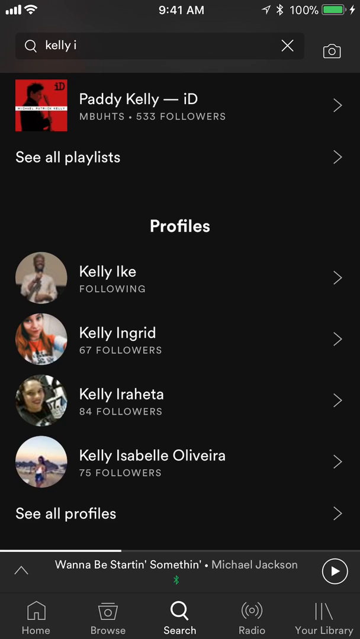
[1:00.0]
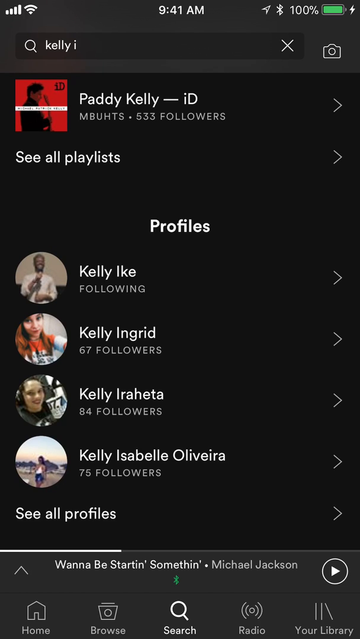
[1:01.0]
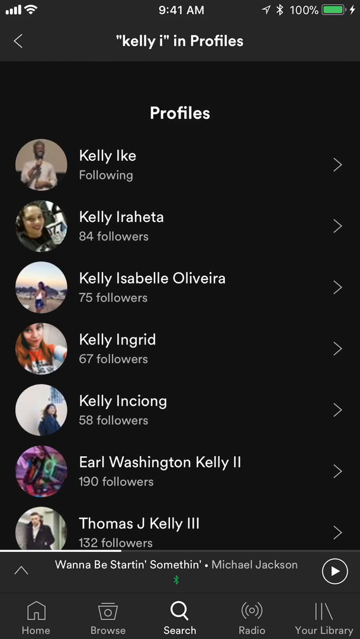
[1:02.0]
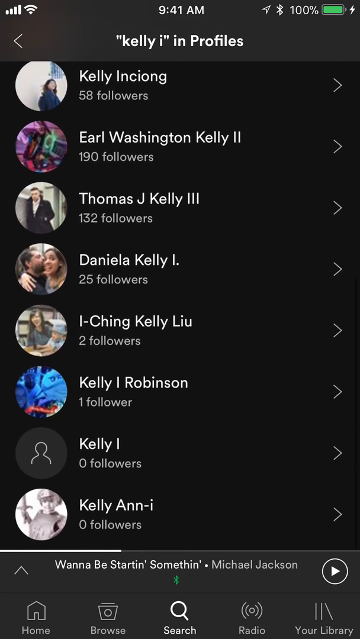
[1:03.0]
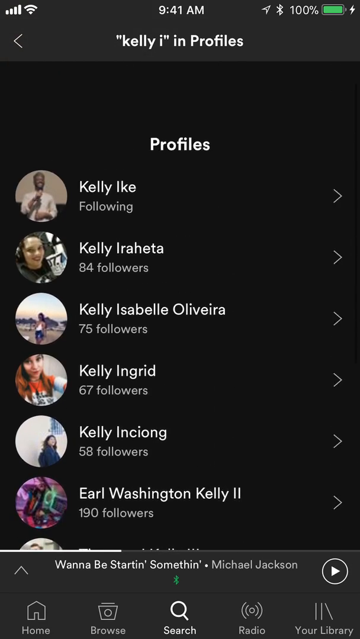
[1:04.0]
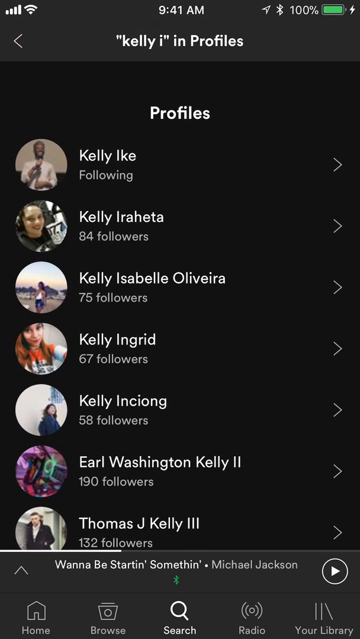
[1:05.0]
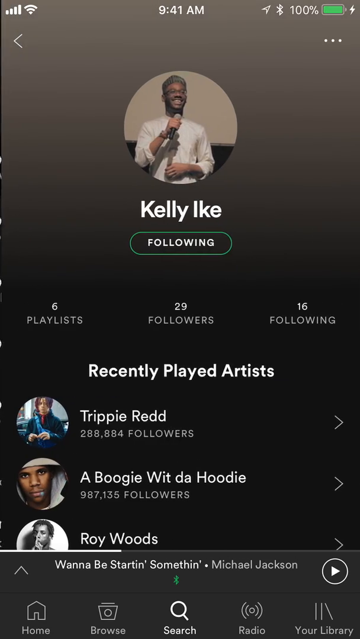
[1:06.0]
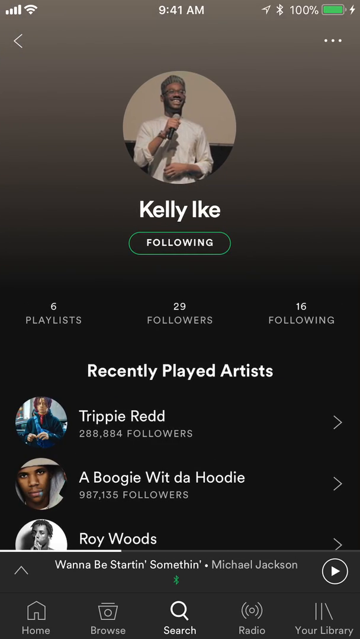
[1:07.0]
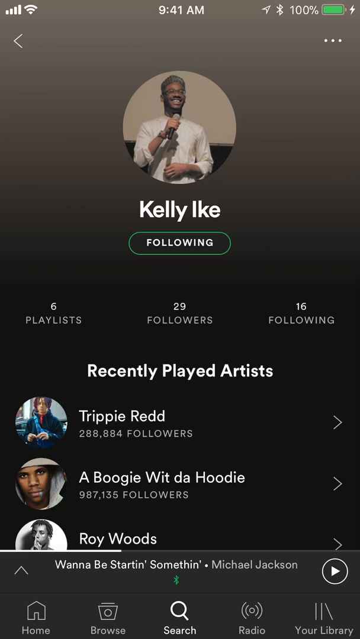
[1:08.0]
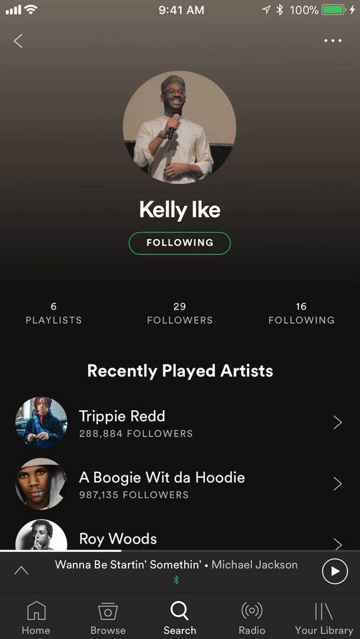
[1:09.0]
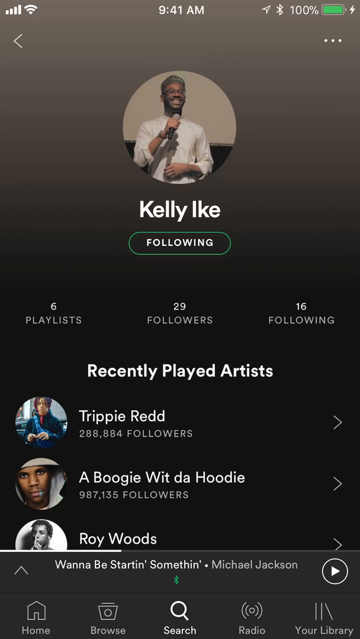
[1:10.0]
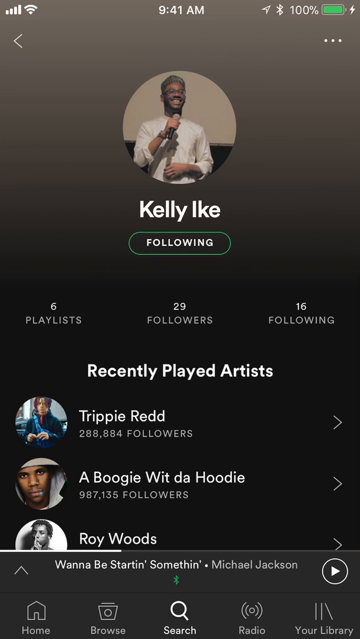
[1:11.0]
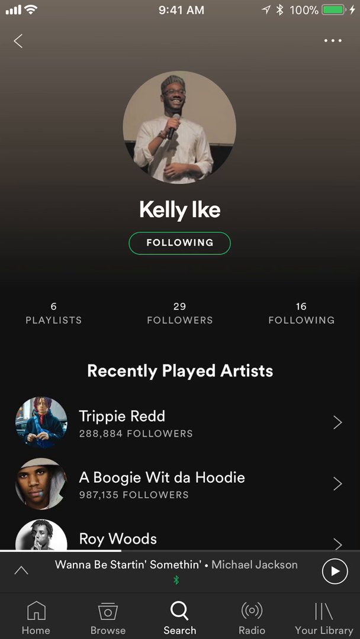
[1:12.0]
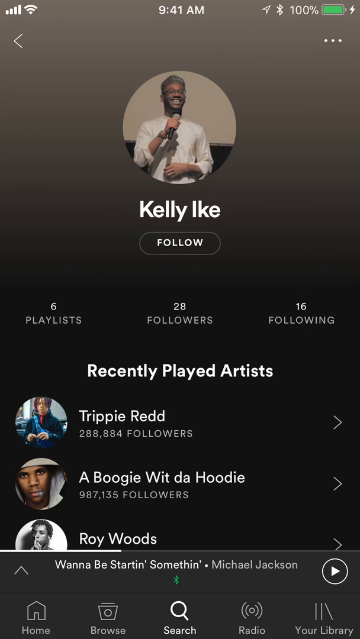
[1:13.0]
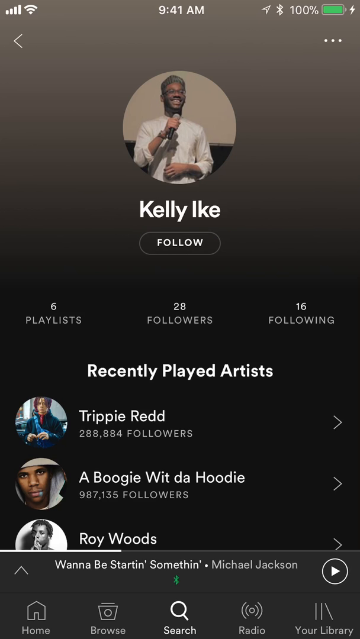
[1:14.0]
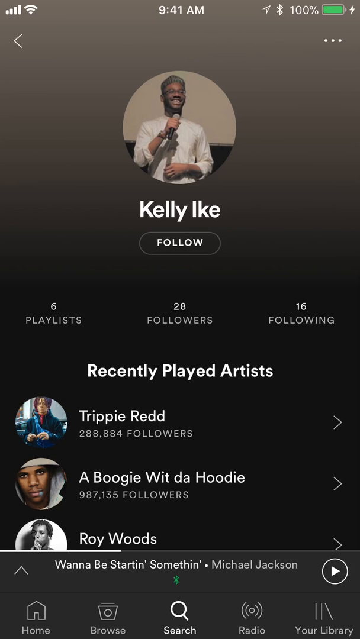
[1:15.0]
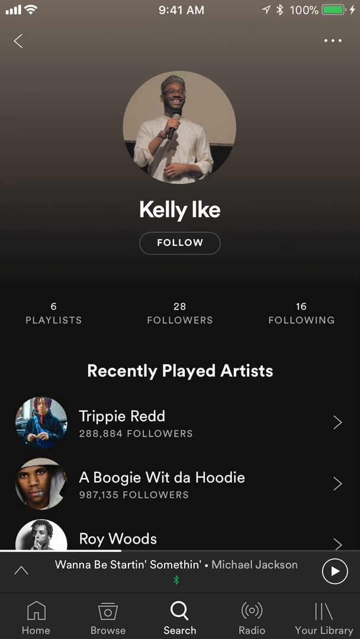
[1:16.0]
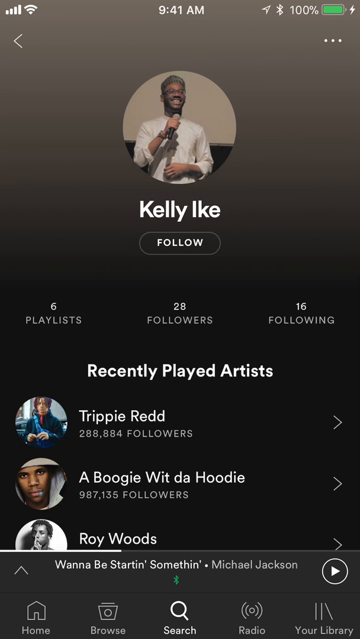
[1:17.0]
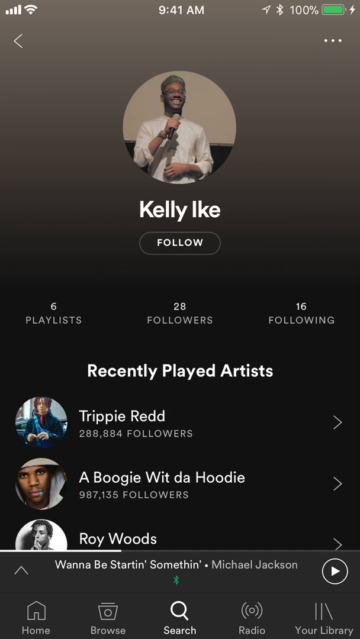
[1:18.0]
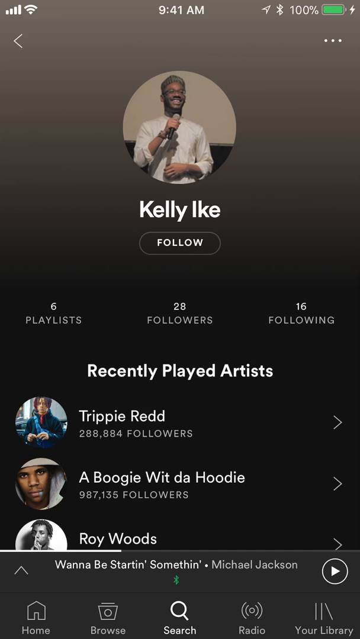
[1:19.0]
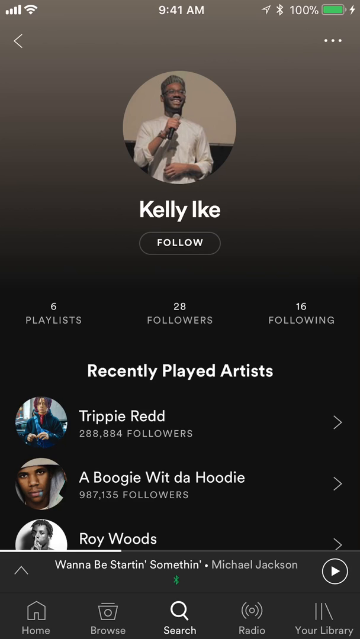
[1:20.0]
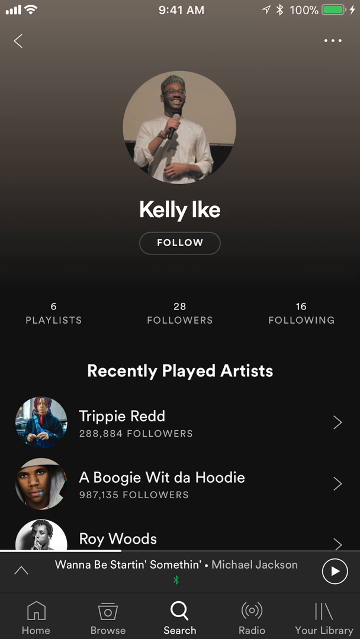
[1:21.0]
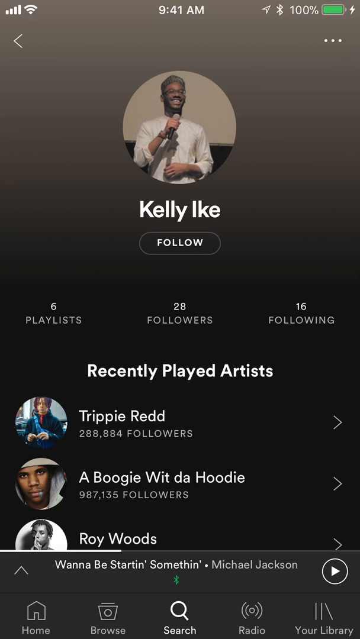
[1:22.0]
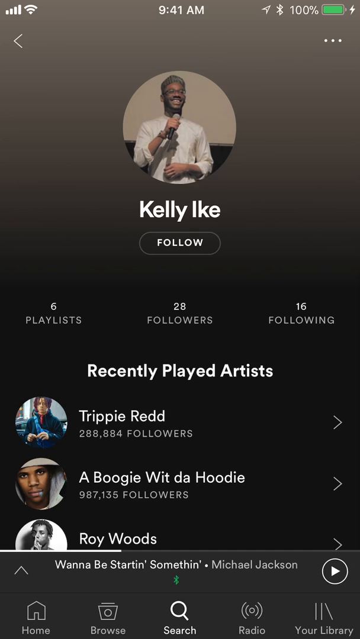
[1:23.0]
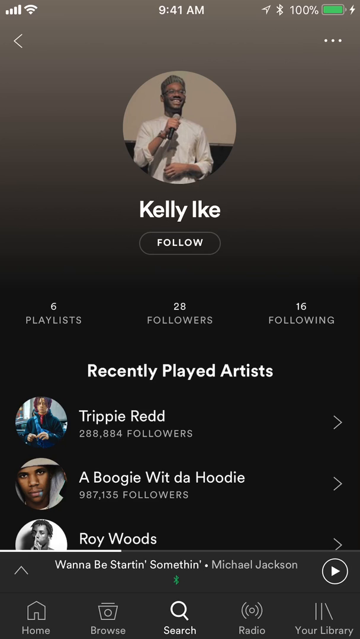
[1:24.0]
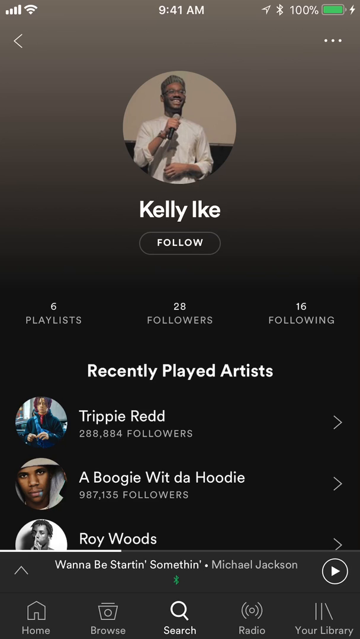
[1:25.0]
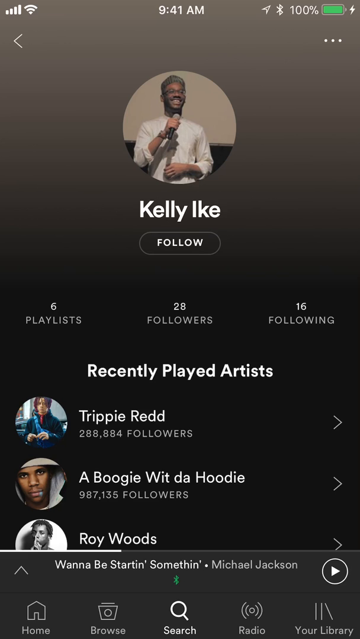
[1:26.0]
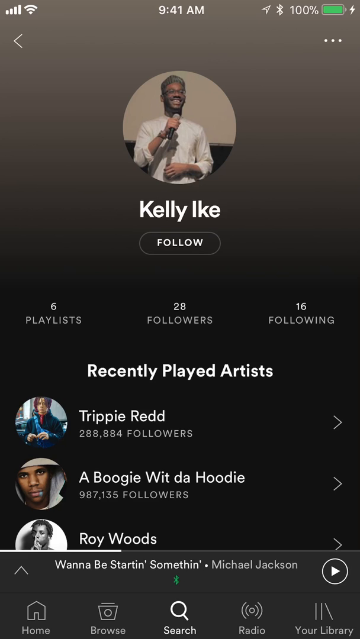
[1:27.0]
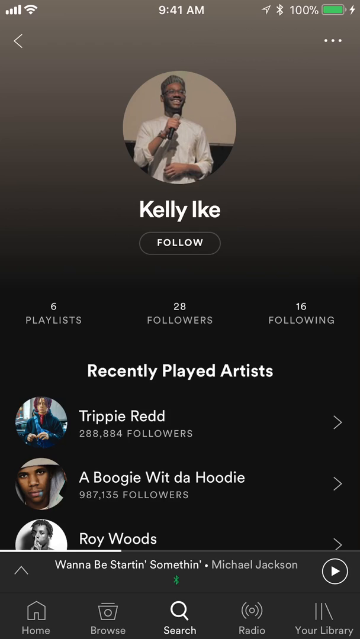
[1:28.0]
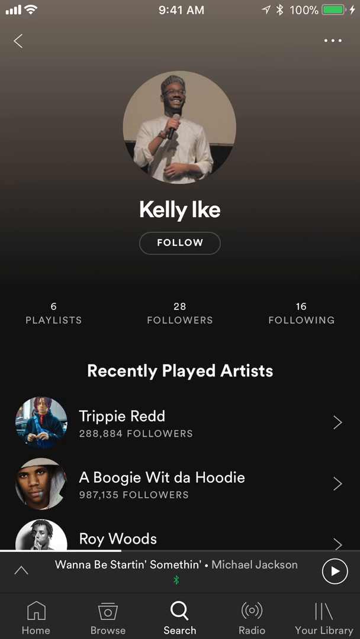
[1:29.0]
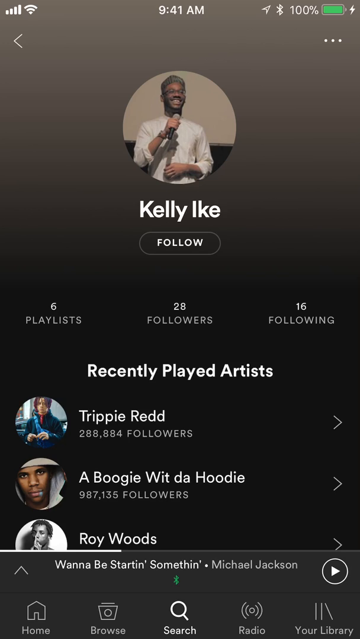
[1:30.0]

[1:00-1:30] The same search page of the music streaming service remains on screen, with "Kelly I" typed in the search bar. The results show Patty Kelly ID, apparently an artist, and beneath it a profiles section listing Kelly Ike, who is followed by the user, Kelly Ingrid with 67 followers, Kelly Arahita, Kelly Isabelle Oliveira, and a "See all profiles" option. More Kelly profiles follow, including Kelly Inseong, Washington Kelly and Thomas J. Kelly, among many other Kelly choices. Kelly Ike is selected, and the profile shows Kelly Ike's recently played artists: Trippie Redd, A Boogie with the Hoodie and Roy Woods. Wannabe Startin' Somethin' by Michael Jackson is still playing. The profile also shows the number of playlists, the number of followers and how many accounts the person is following.